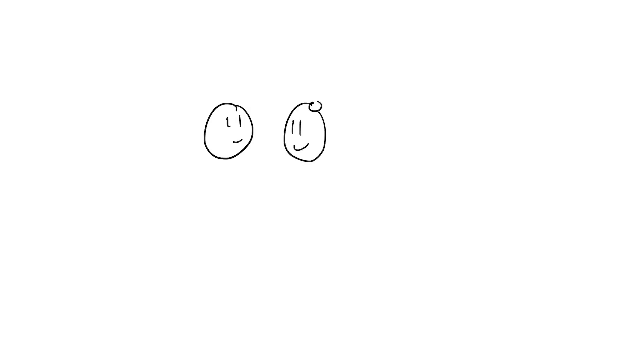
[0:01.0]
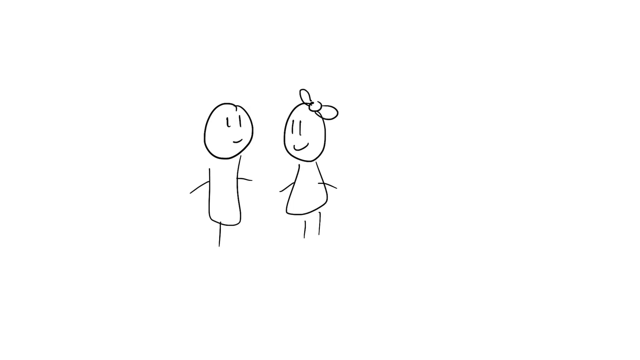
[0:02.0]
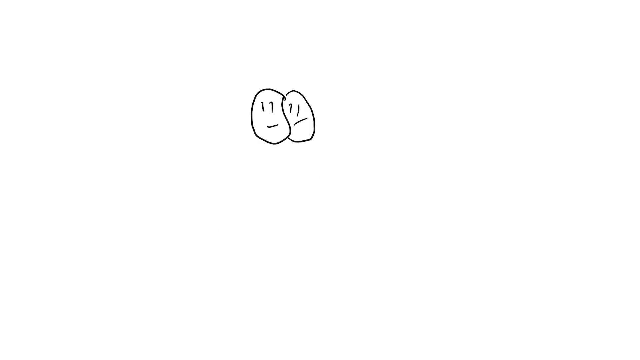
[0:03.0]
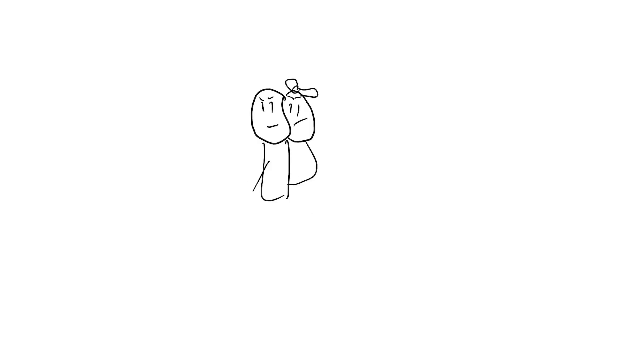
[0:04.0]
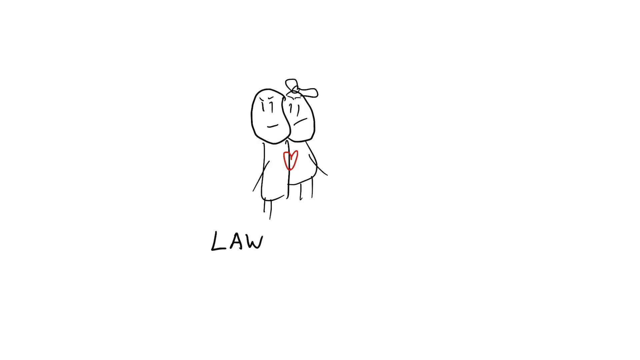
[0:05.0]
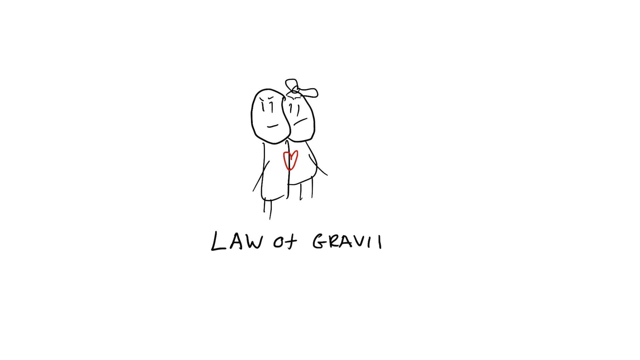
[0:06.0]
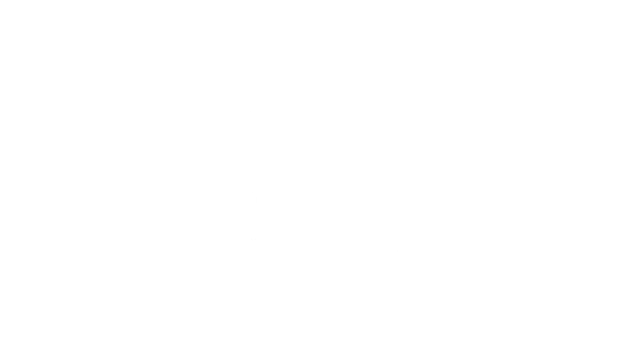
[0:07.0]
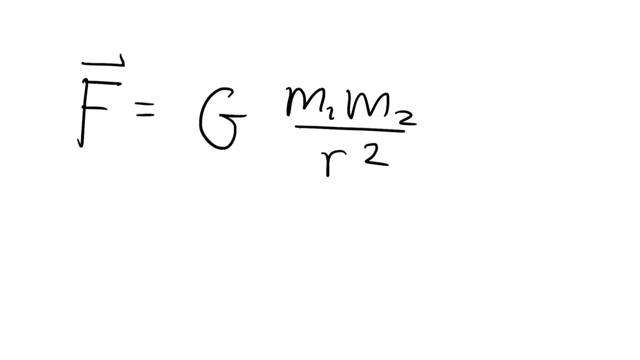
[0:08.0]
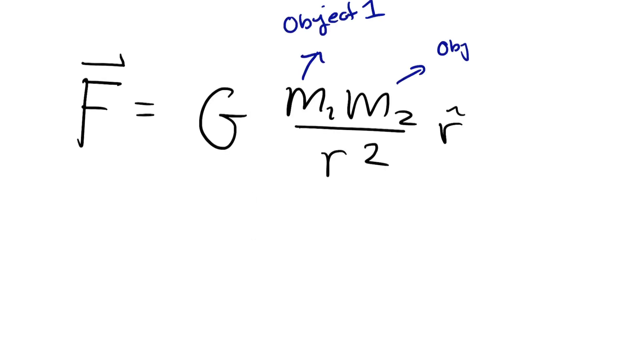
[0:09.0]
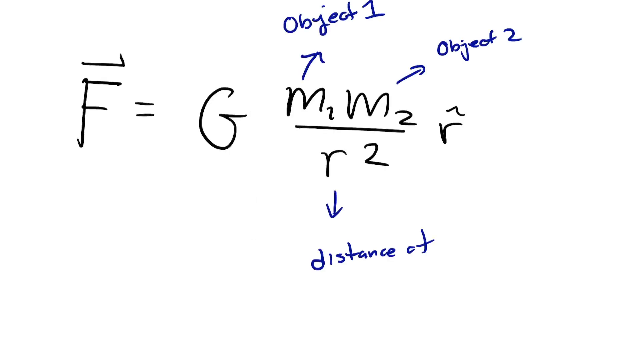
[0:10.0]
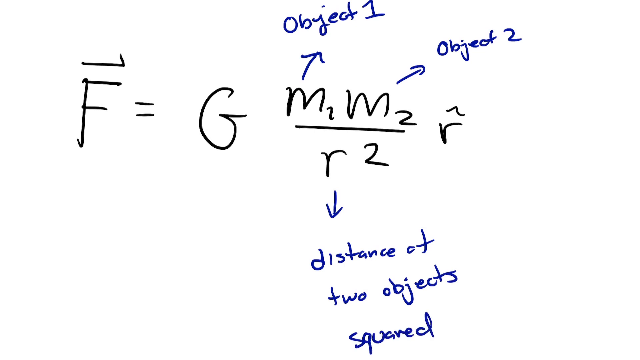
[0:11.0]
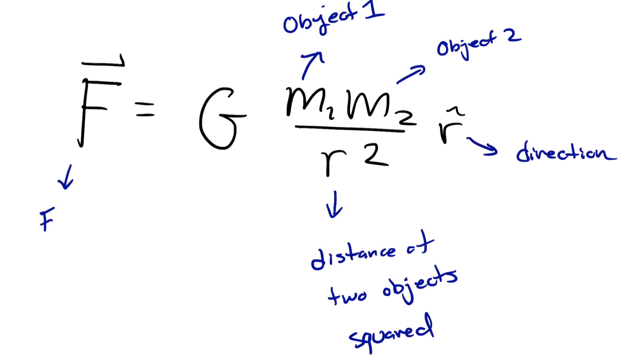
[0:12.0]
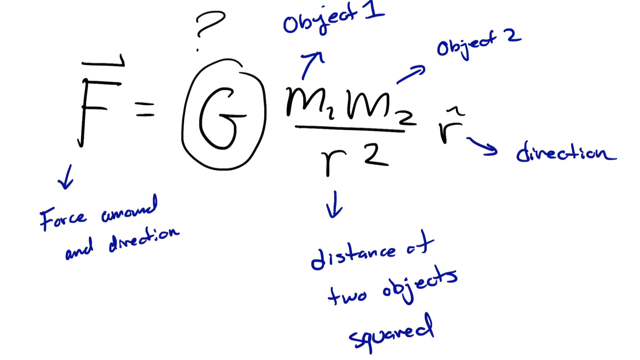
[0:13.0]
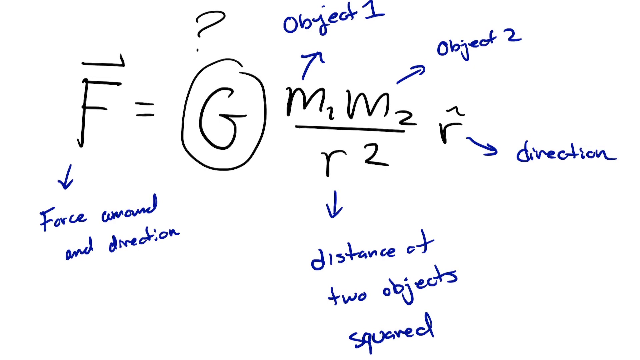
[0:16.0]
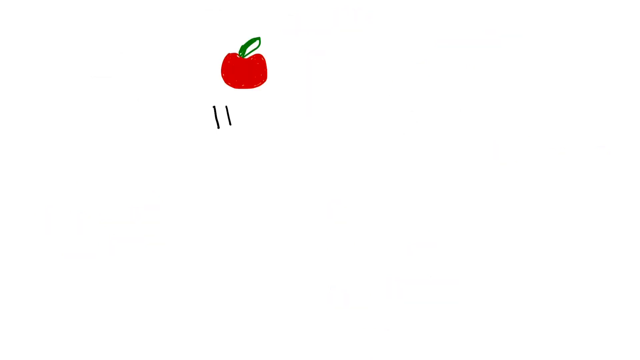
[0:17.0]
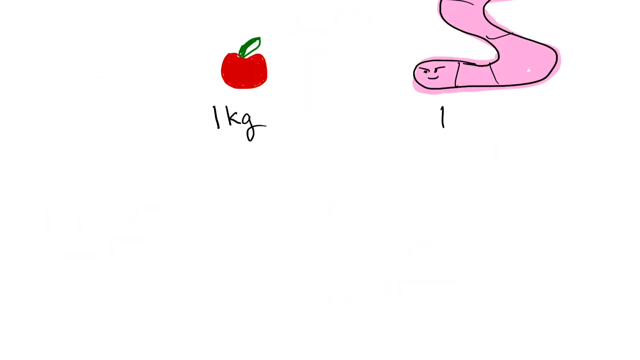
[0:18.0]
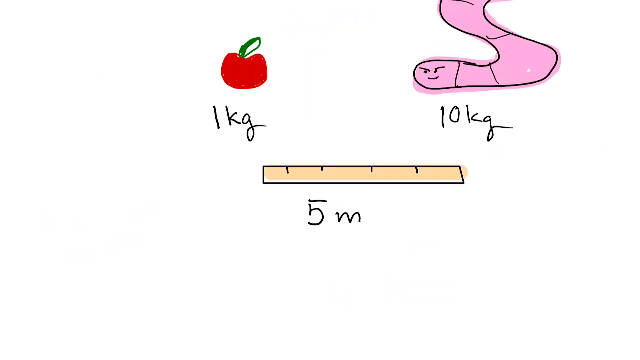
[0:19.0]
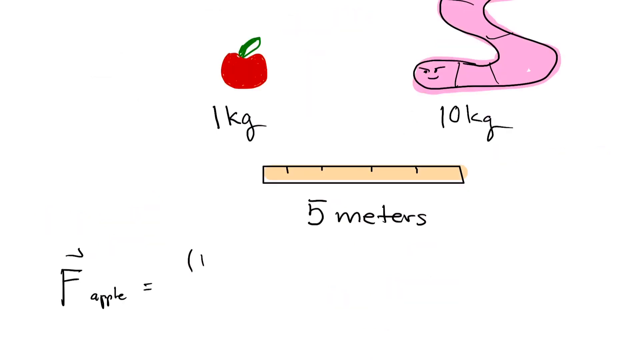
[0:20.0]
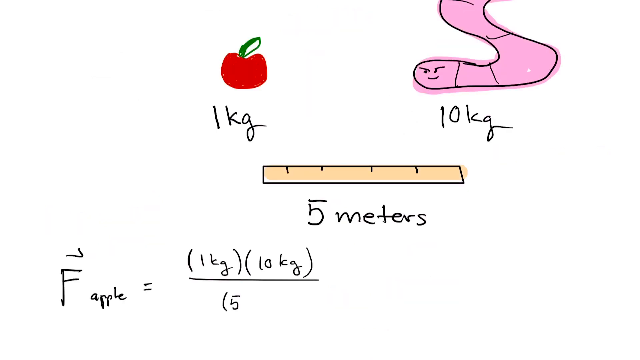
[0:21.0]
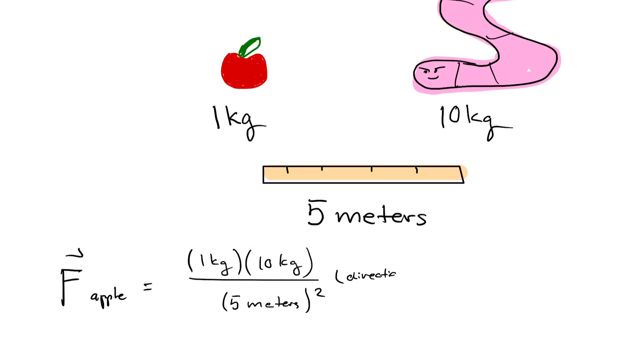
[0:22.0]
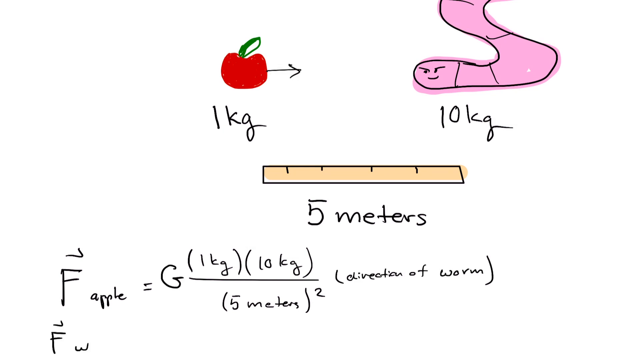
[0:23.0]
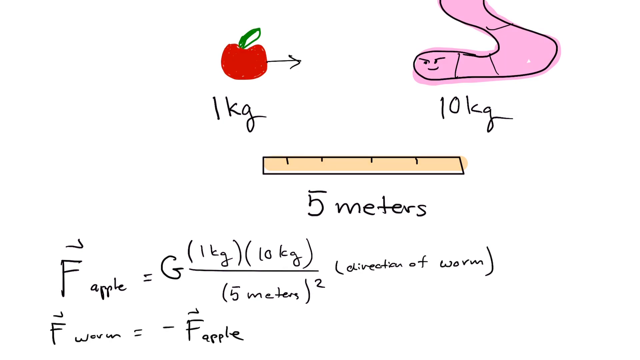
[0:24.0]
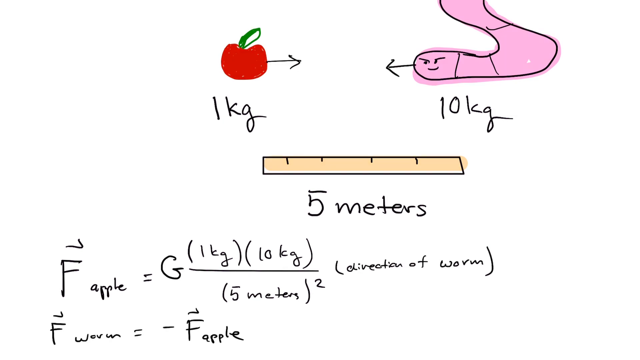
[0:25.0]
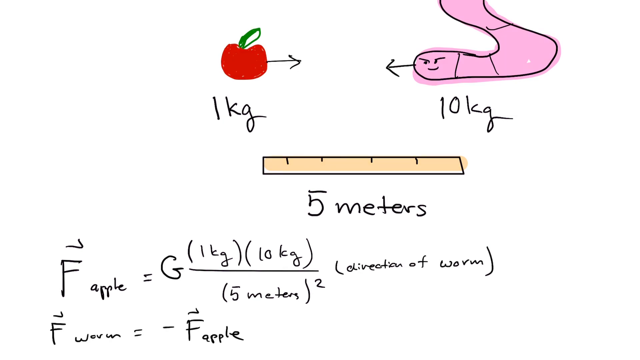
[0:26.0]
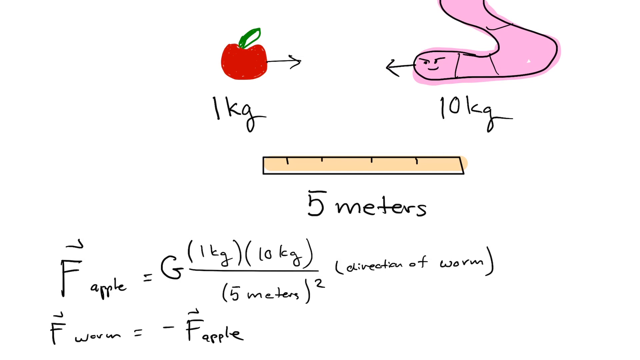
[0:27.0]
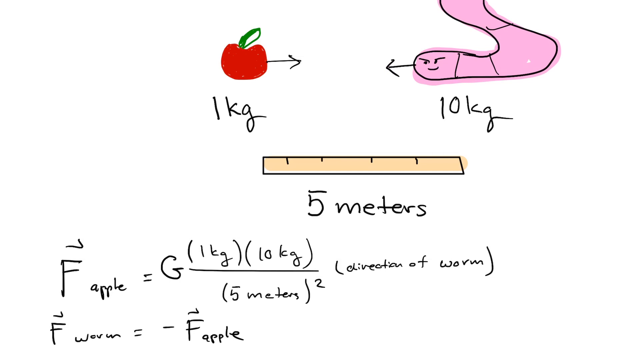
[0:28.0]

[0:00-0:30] An animation shows someone drawing some little people: a boy and a girl, both smiling. The drawing is very simple and appears to be done in black ink. The girl has a little bow in her hand, and between the two, in the center, there is a little red heart. The text reads "Law of Gravitation," followed by what look like mathematical equations beginning with "F =" and involving M squared over R squared. The parts are labelled object one and object two, with the R squared labelled as direction, and a question mark appears in the equation.